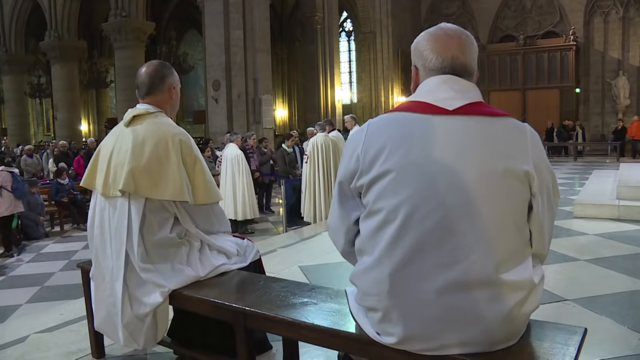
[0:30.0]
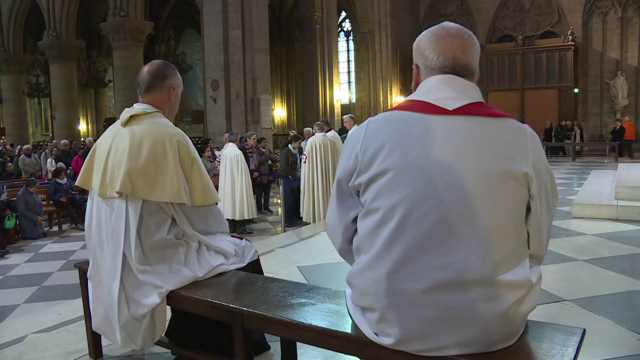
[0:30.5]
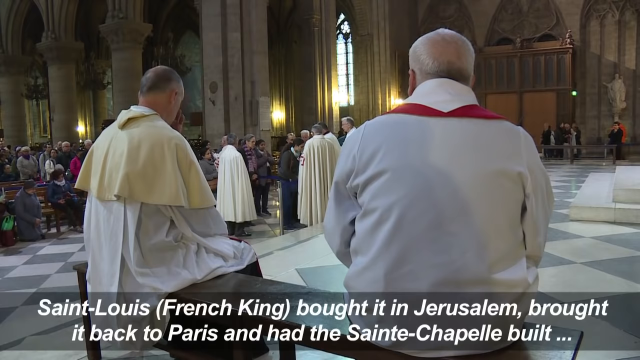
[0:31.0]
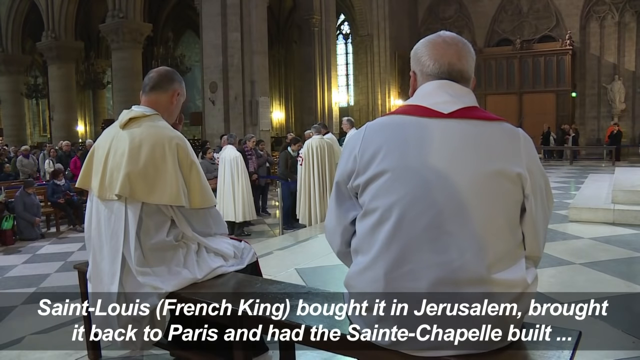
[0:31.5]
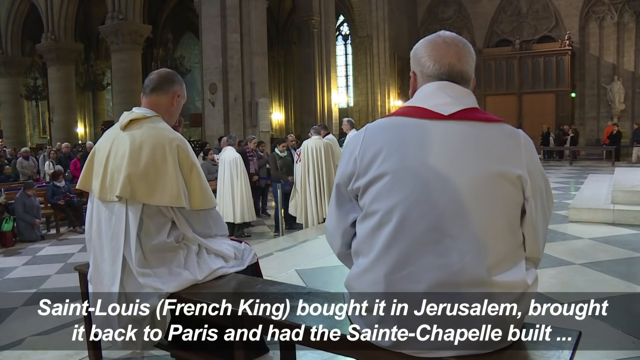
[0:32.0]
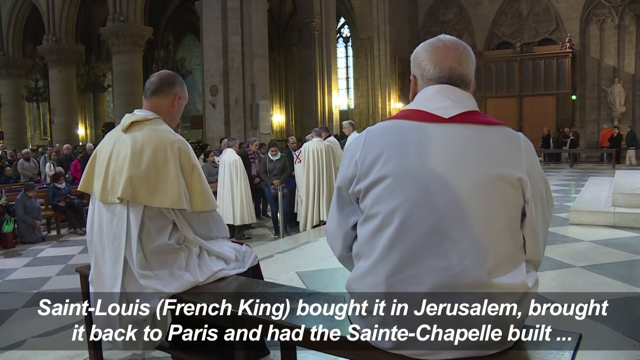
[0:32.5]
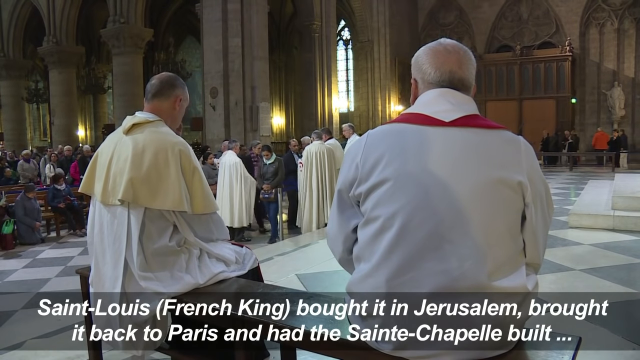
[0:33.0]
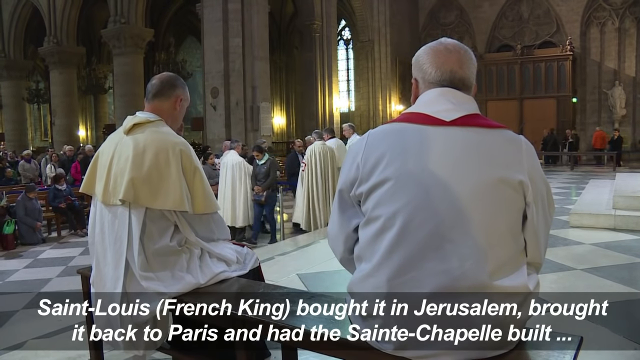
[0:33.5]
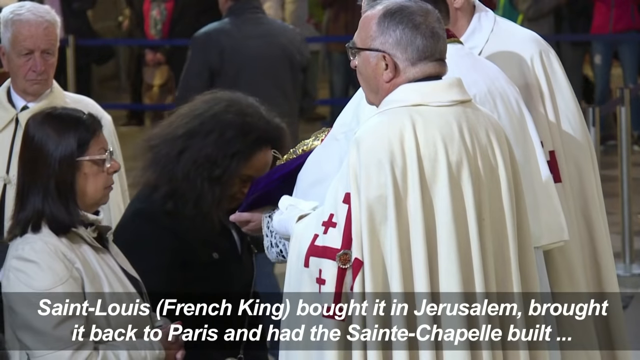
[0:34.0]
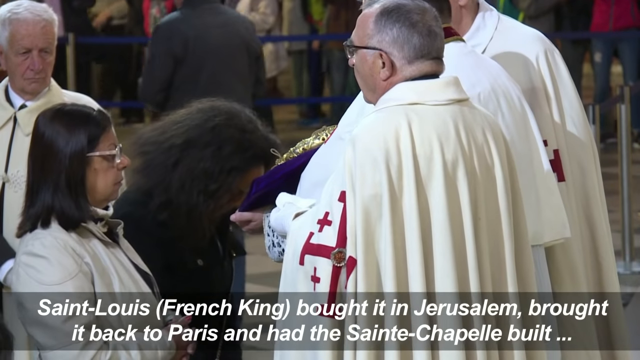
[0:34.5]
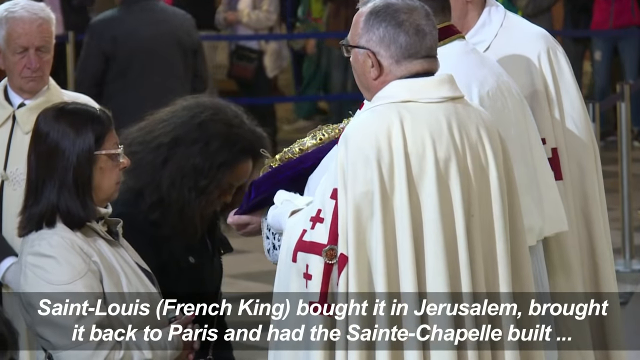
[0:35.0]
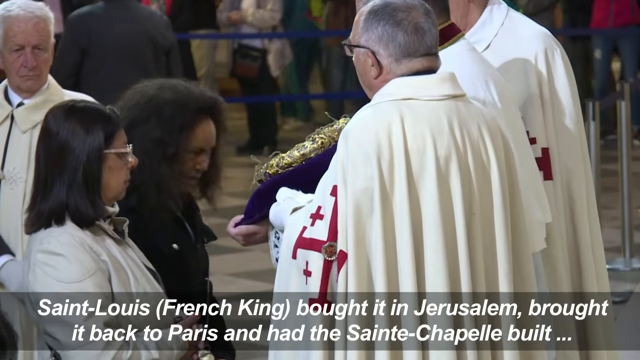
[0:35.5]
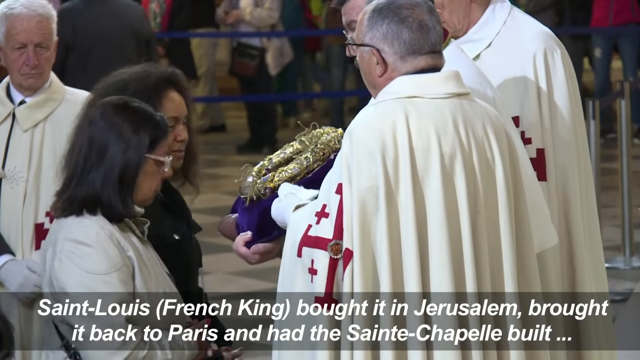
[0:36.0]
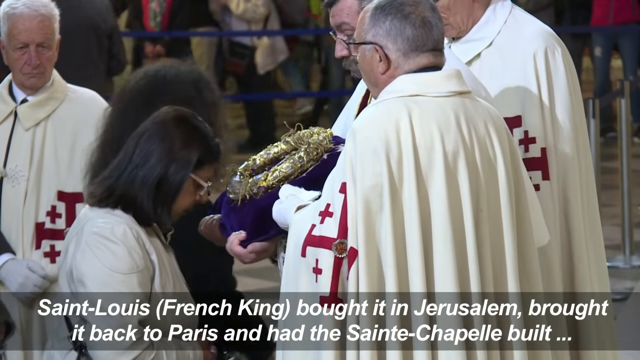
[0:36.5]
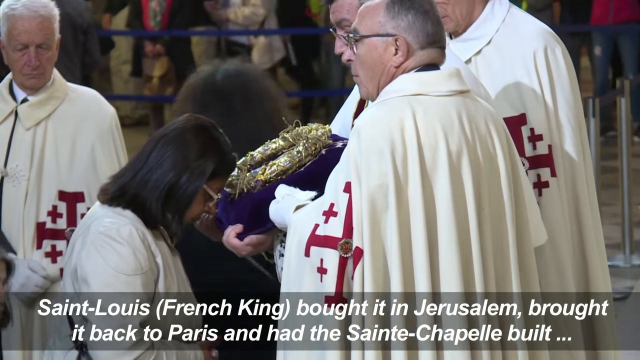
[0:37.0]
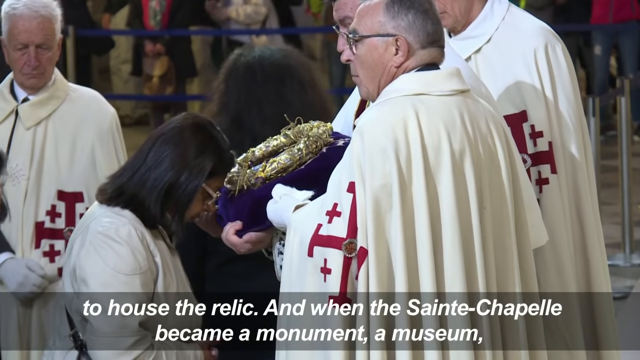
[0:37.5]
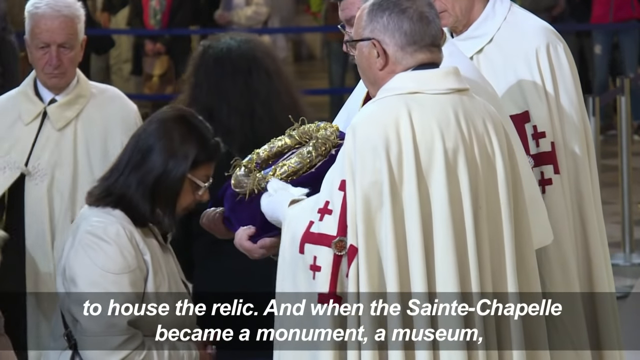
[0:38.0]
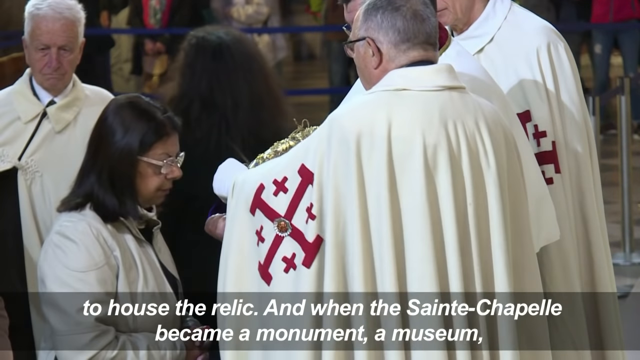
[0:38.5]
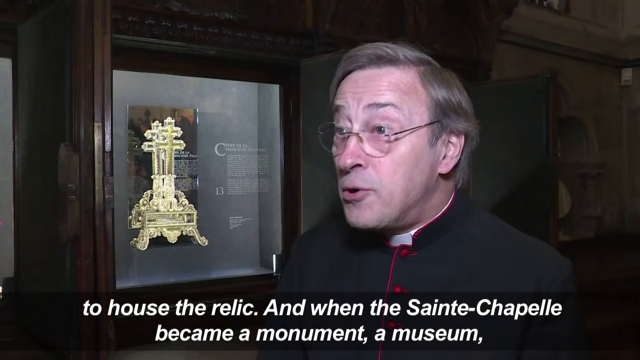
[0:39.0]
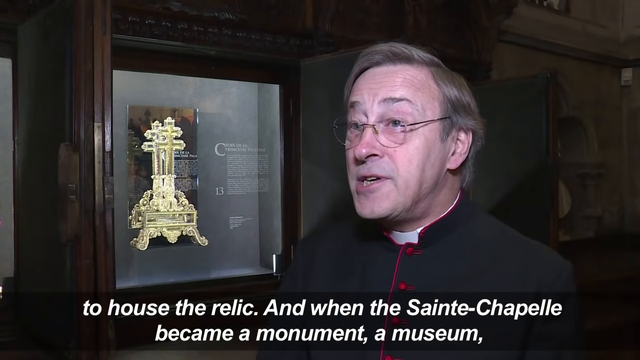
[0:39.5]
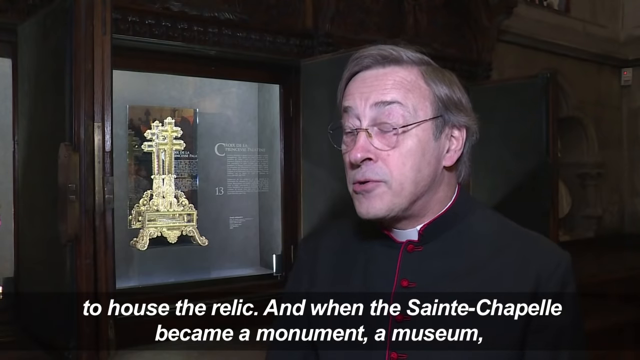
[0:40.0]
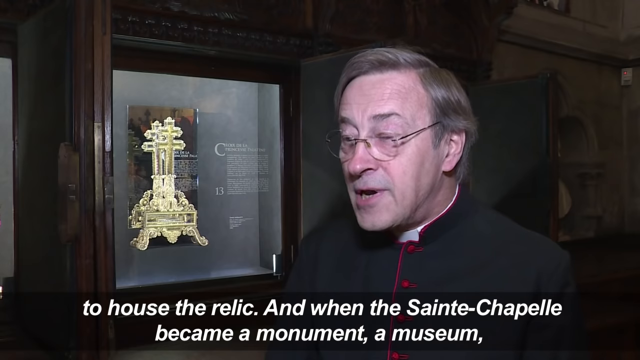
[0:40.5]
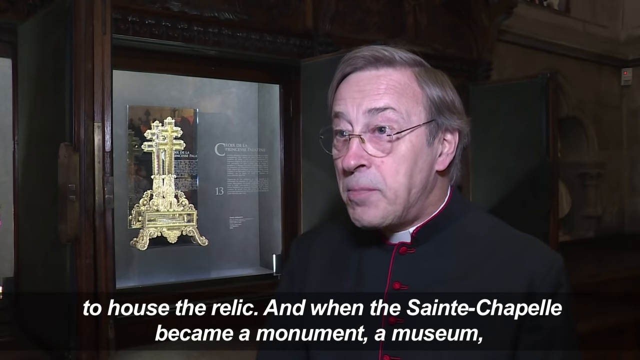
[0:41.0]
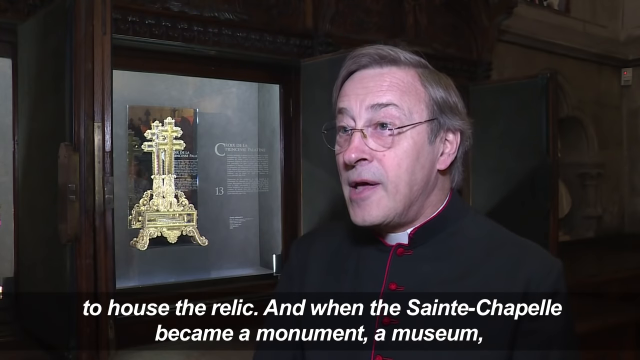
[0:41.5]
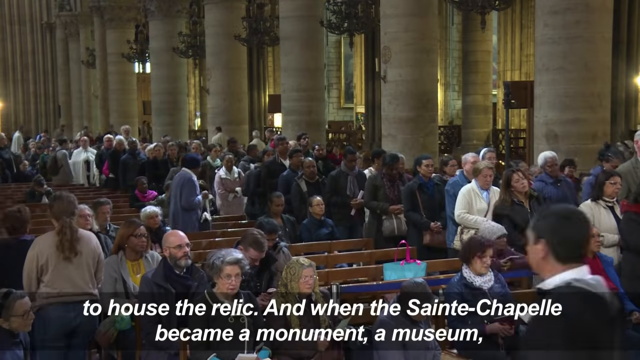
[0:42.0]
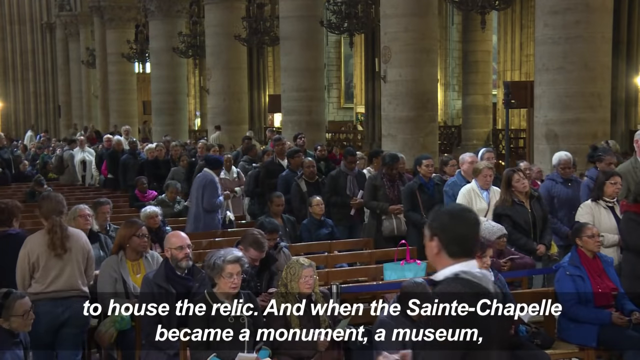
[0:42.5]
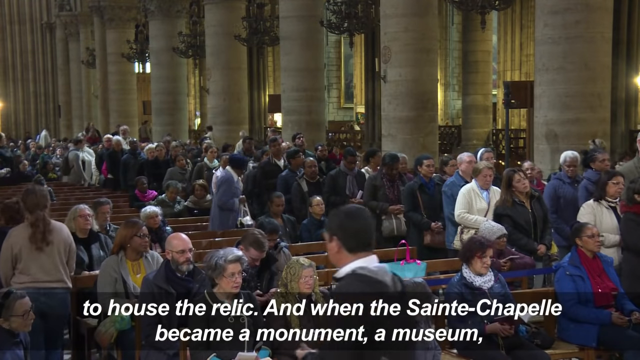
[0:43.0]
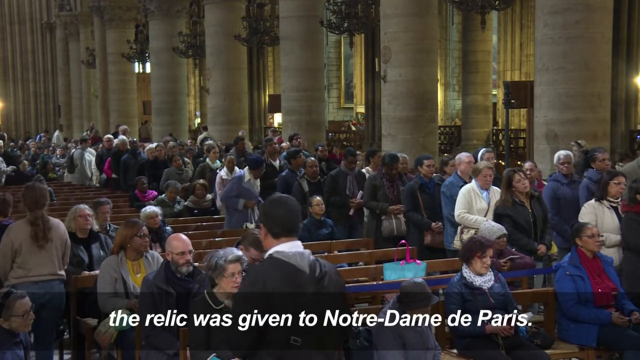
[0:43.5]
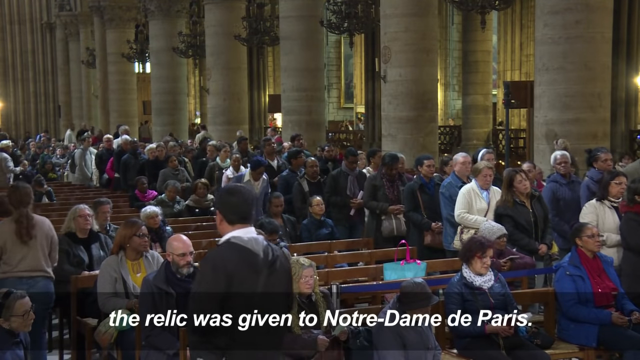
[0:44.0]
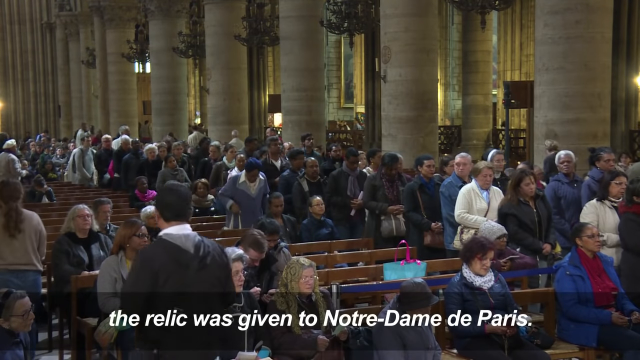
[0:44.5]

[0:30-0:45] Inside the church, people stand in line waiting to kiss the crown, with some clergy in the distance and two priests in the foreground. The priest says that St. Louis, the French king, bought it in Jerusalem, brought it back to Paris, and had Sainte-Chapelle built to house the relic, and that when Sainte-Chapelle became a monument, the relic was given to Notre Dame. People kiss the crown and put their foreheads on it. The segment ends with a bunch of people waiting in line for their chance to touch the crown; they are of all races and wear different clothing, and it looks cold because they have jackets on.